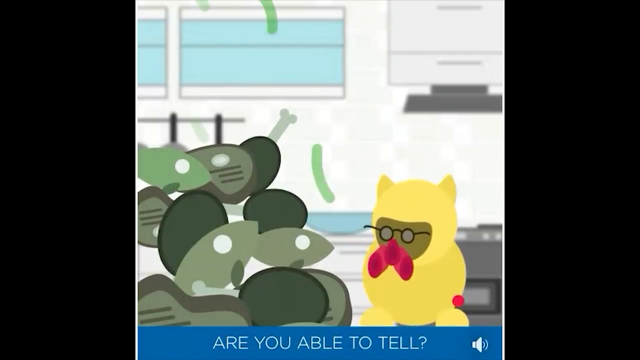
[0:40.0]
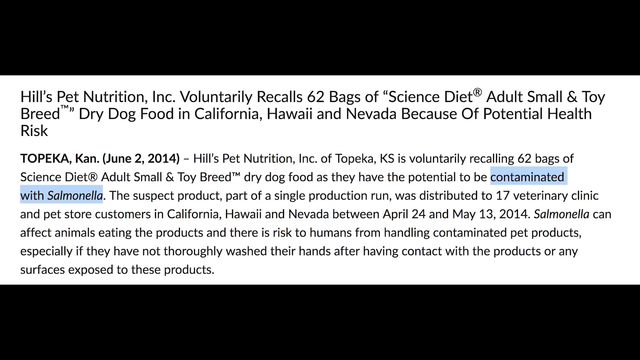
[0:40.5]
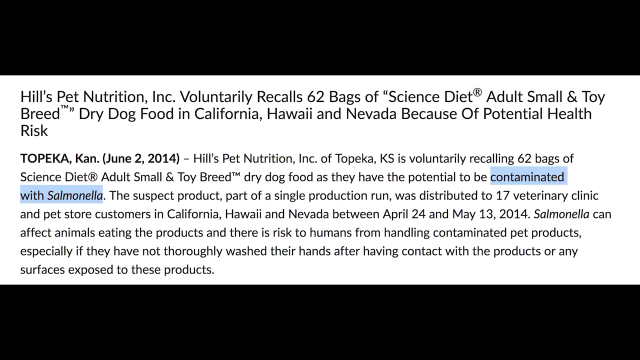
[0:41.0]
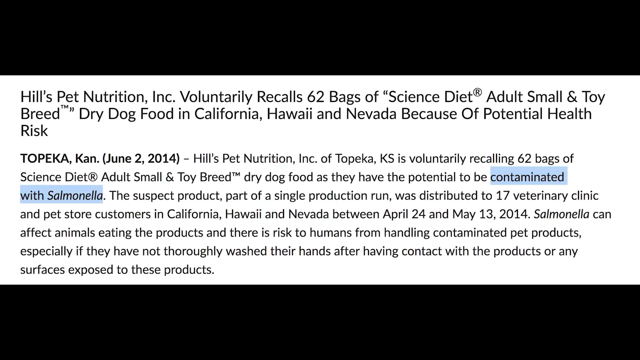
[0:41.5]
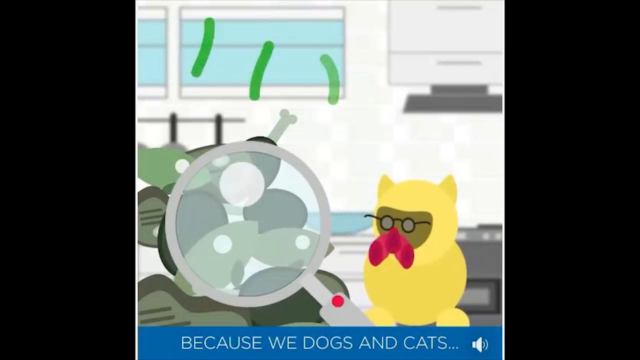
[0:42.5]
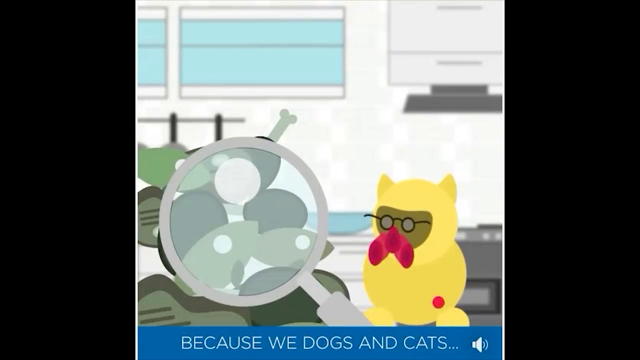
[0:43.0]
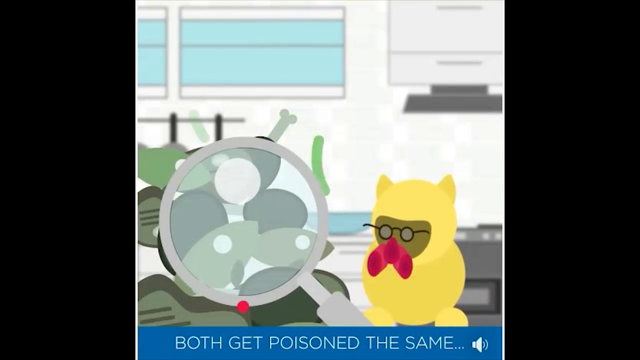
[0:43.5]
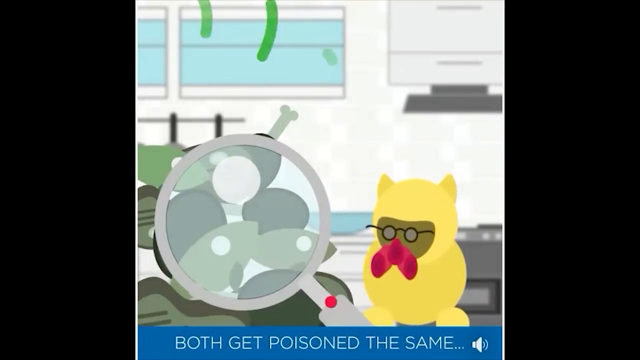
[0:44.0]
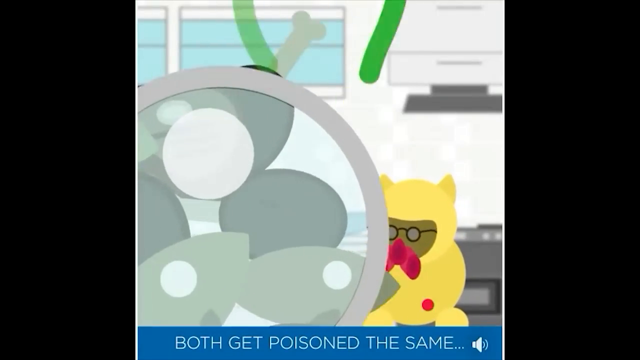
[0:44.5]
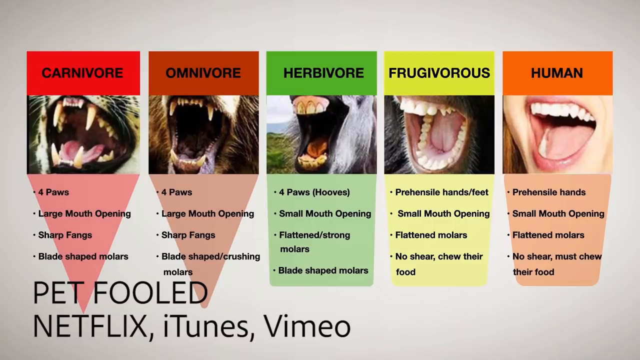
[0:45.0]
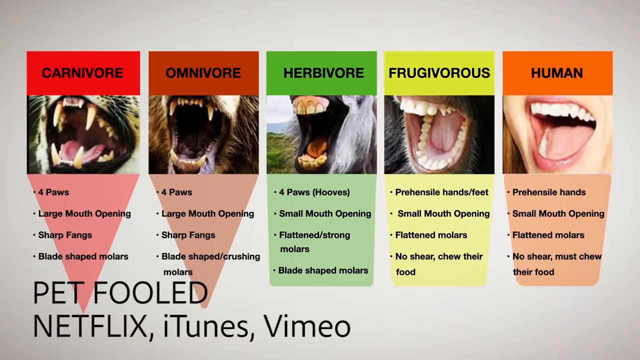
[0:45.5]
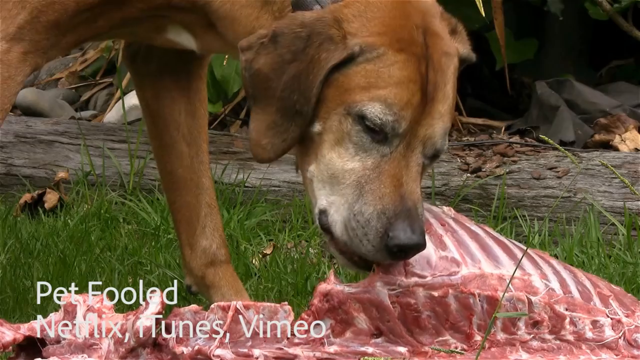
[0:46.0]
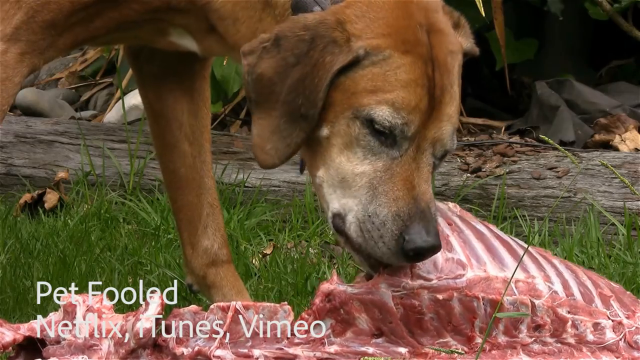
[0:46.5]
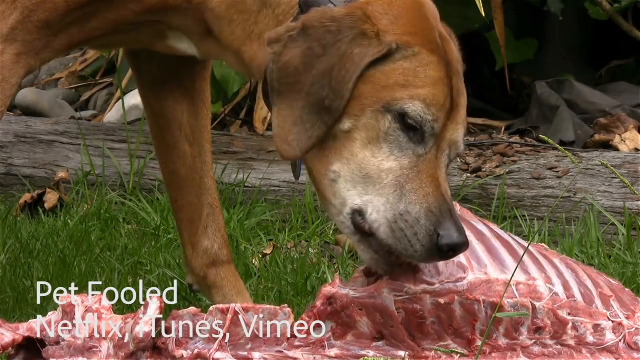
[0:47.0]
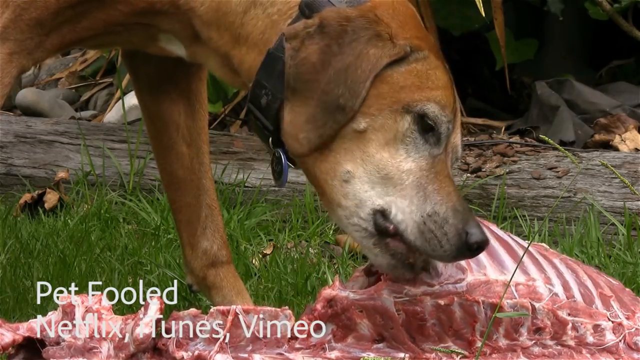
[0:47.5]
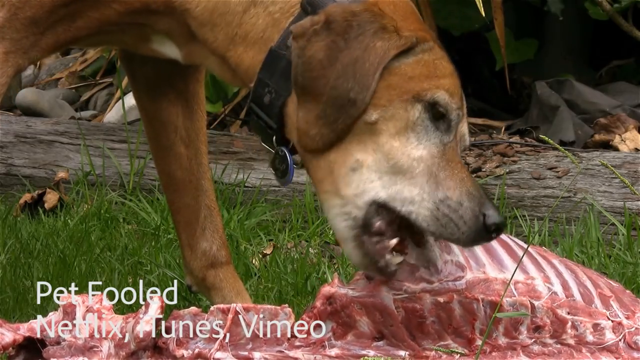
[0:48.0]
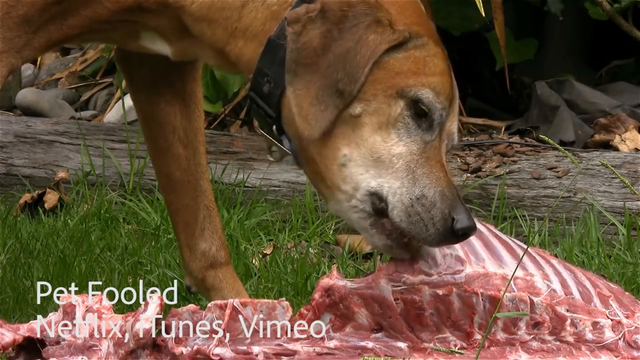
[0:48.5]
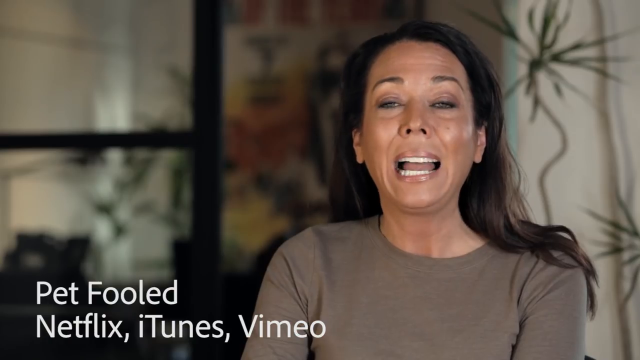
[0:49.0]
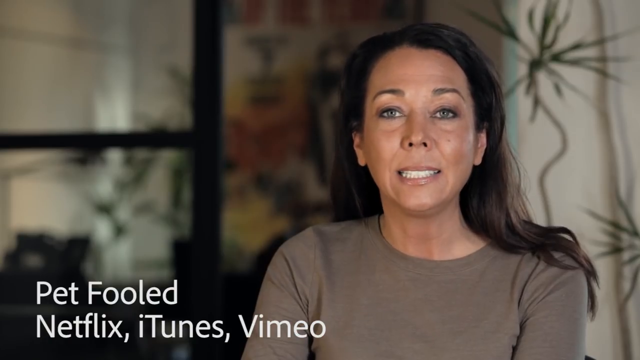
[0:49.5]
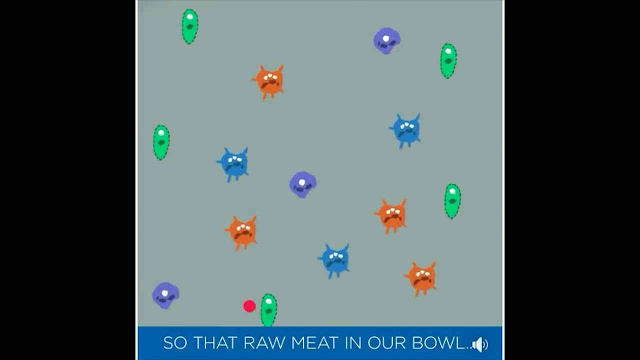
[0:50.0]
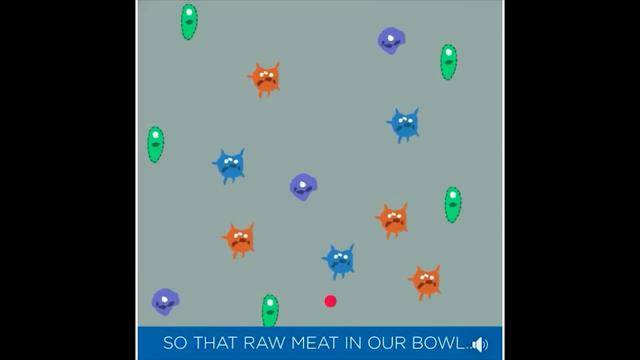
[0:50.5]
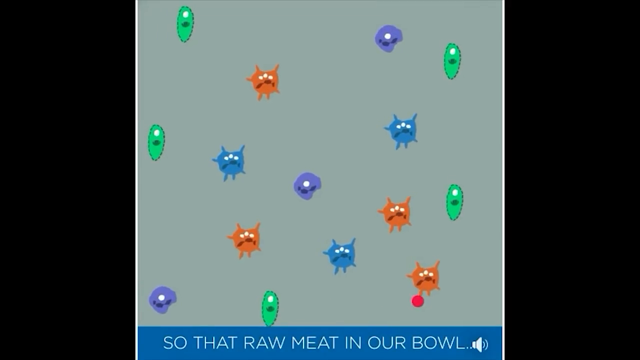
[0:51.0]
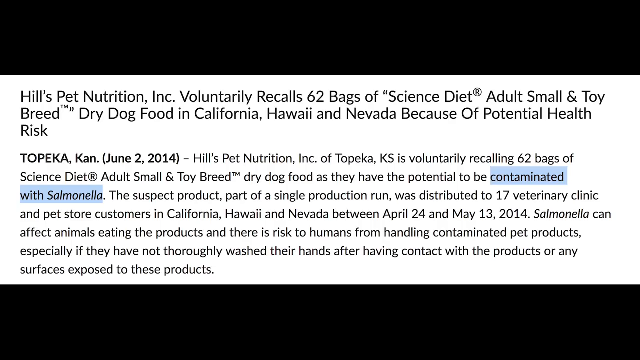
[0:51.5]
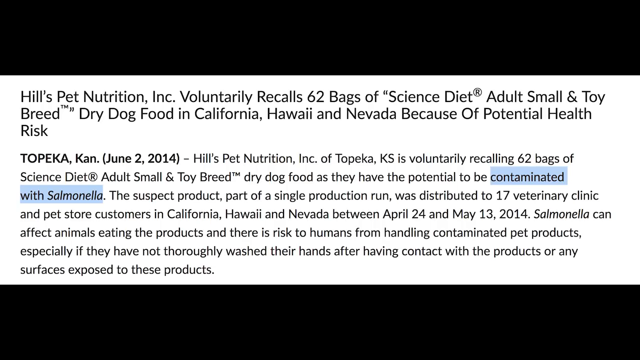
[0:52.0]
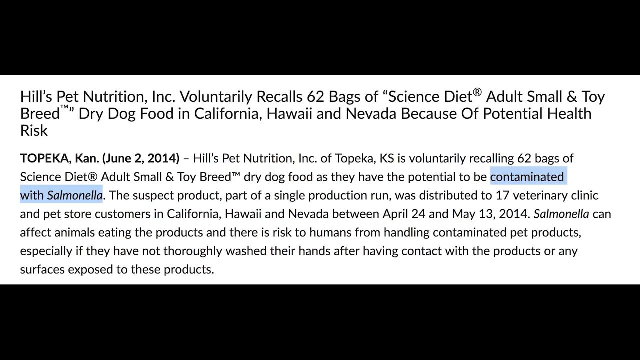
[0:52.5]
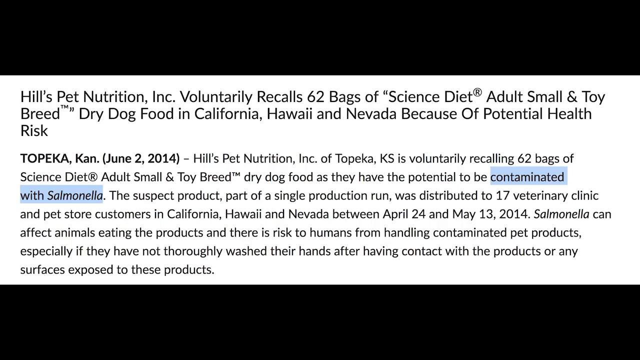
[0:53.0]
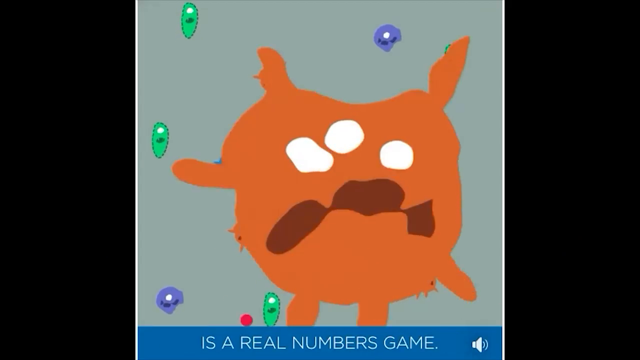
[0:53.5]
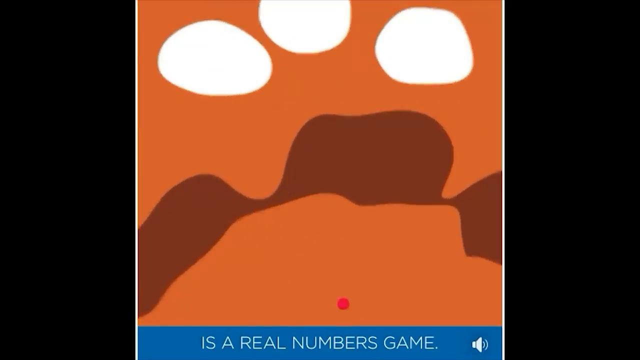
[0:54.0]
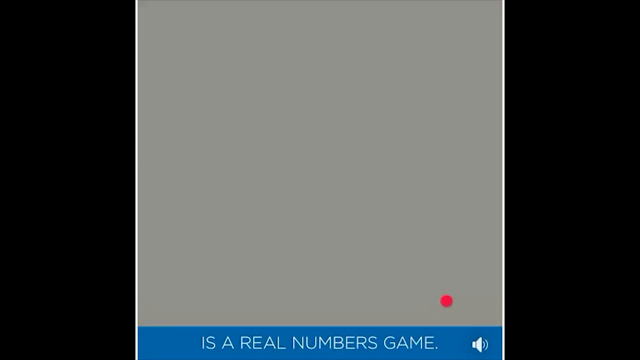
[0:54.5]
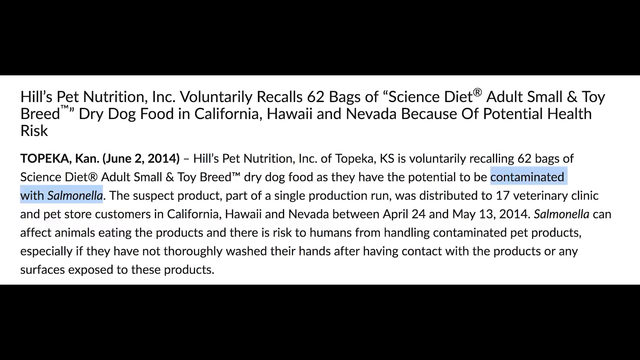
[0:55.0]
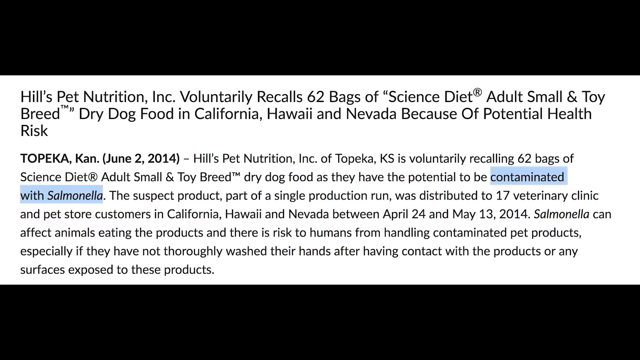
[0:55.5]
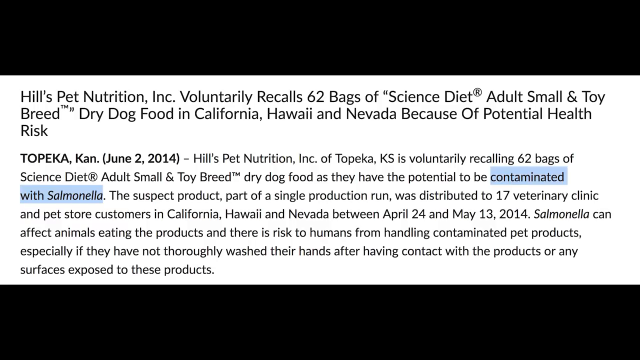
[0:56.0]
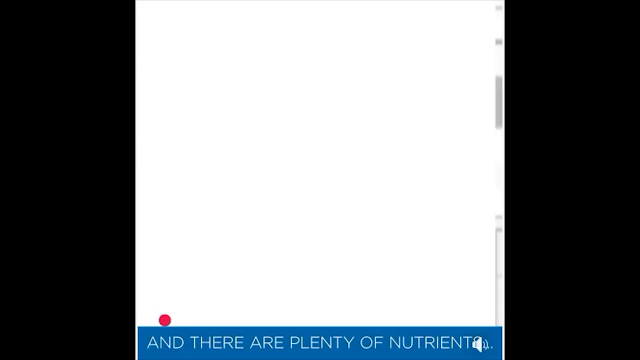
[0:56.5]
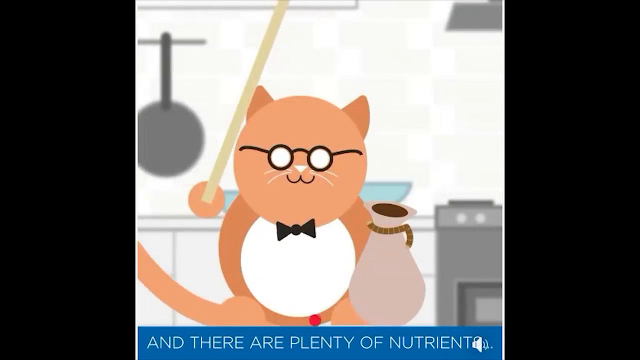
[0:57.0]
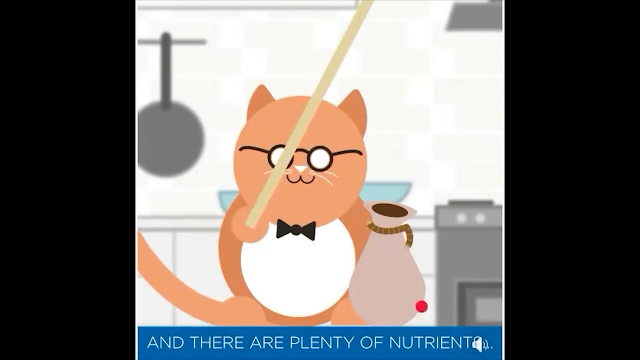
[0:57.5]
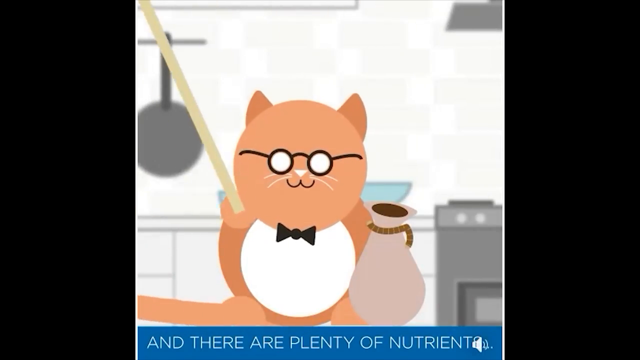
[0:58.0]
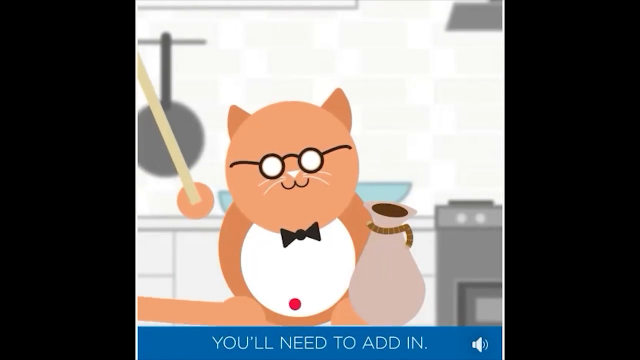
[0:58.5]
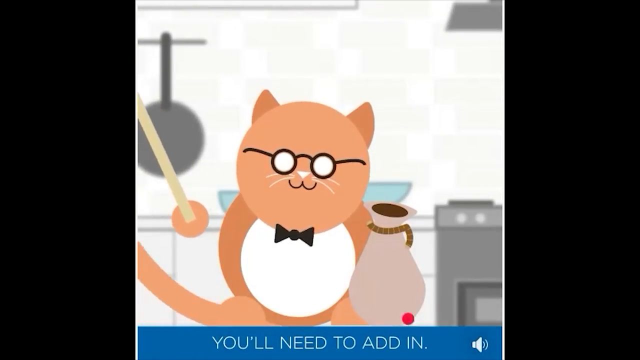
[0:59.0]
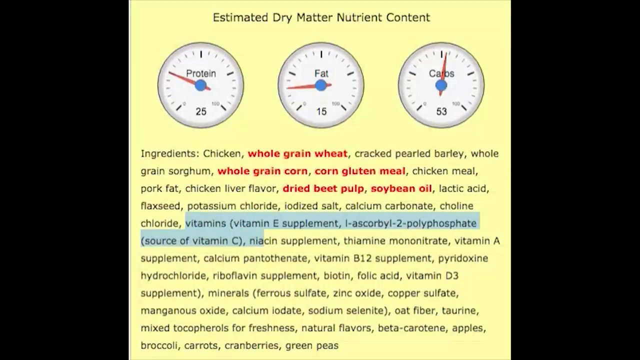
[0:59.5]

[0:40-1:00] In a cartoon, the cat wears some sort of biohazard suit, with lots of rotten food and fish piled up next to it. What appears to be a news article about the same Hill's Pet Nutrition dog food follows, with "contaminated with salmonella" highlighted in blue. Back in the cartoon with the rotten meat and fish, a big magnifying glass hovers over the meat and fish, and when it zooms up, five images of different mouths are shown: carnivore, omnivore, herbivore, frugivorous and human, with information about the different mouth sizes, the teeth, and how many paws or hands and feet they have. A dog is then shown eating what appears to be ribs from a carcass, and a lady briefly talks to the camera. The clips go by quite fast before returning to the cartoon cat.